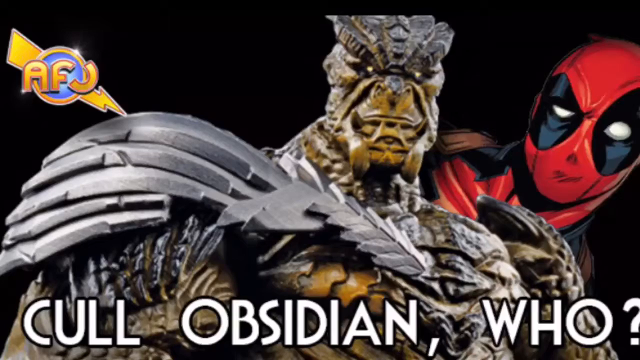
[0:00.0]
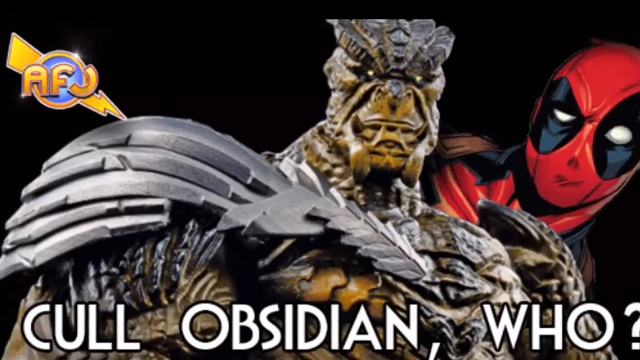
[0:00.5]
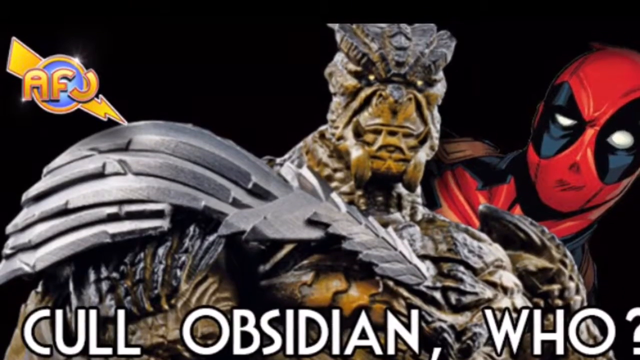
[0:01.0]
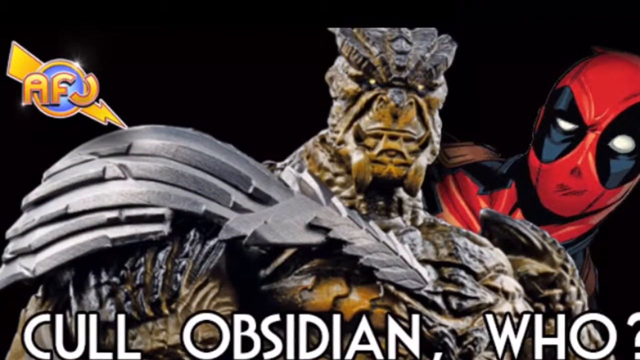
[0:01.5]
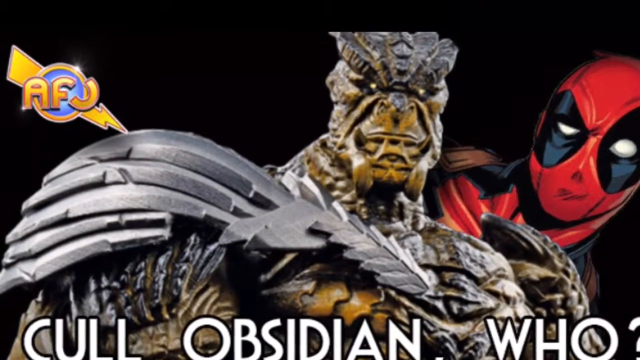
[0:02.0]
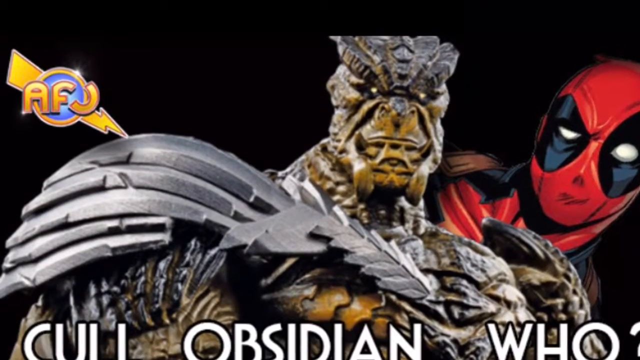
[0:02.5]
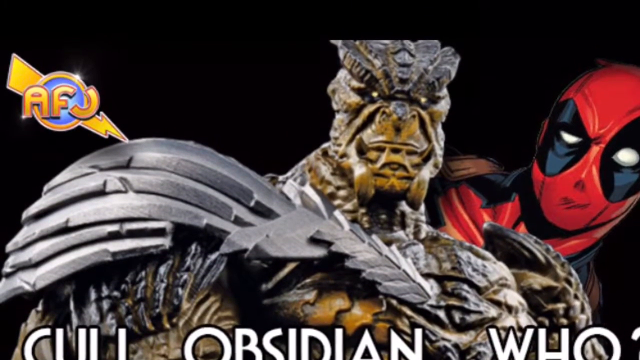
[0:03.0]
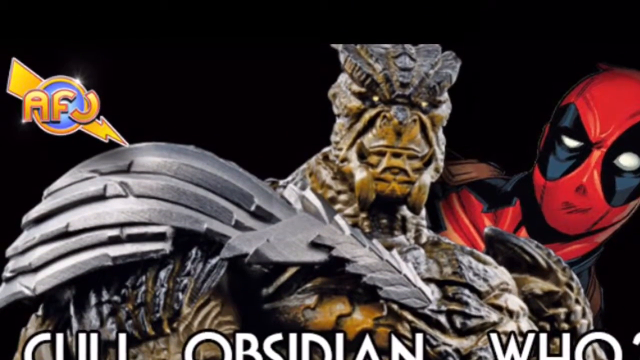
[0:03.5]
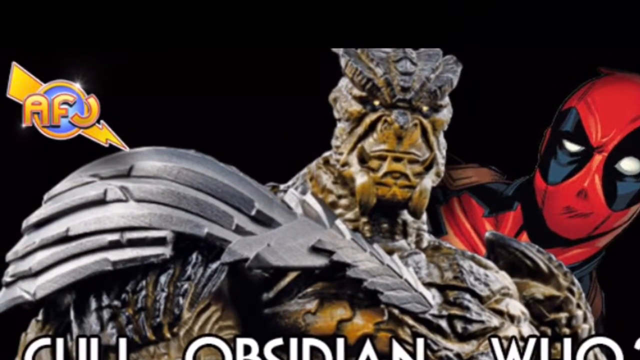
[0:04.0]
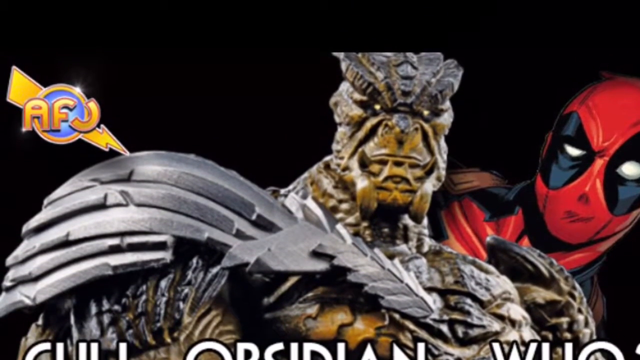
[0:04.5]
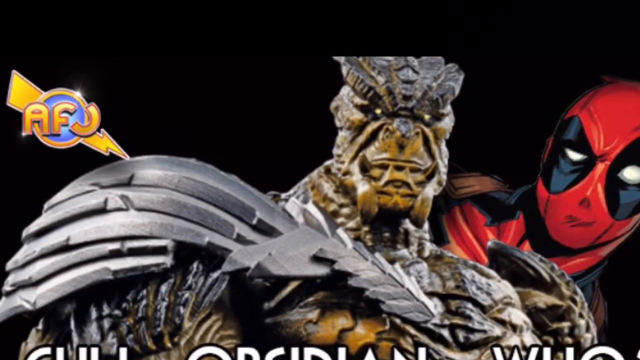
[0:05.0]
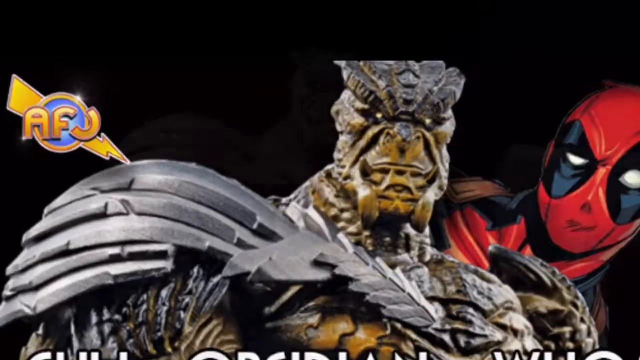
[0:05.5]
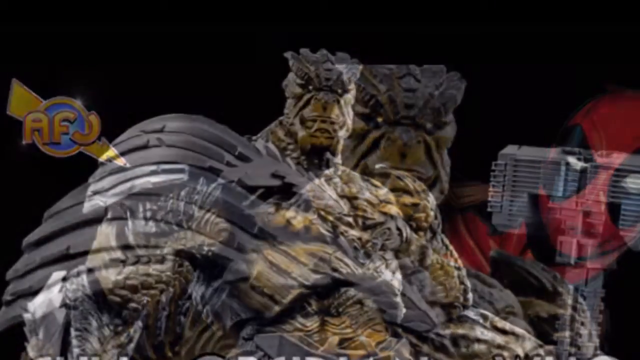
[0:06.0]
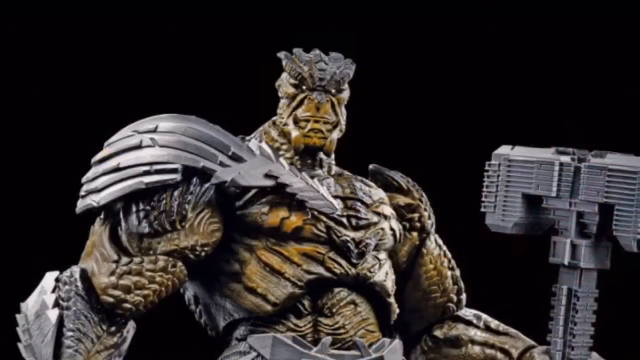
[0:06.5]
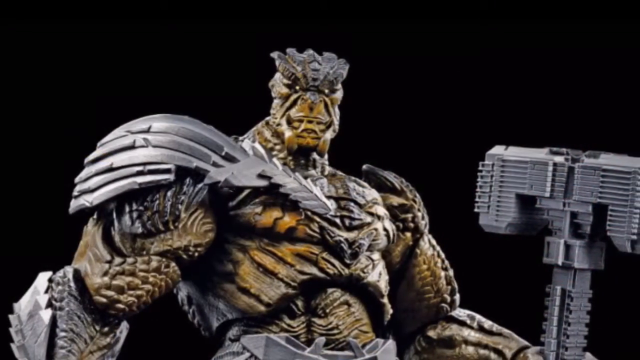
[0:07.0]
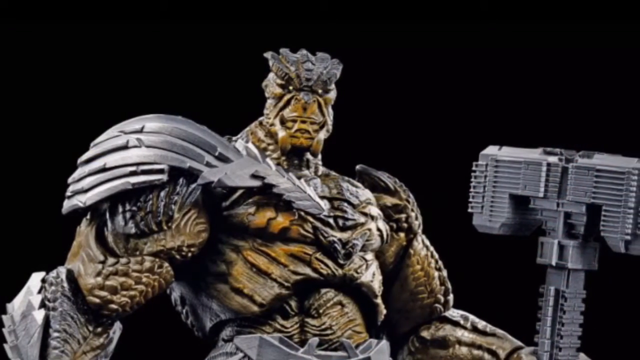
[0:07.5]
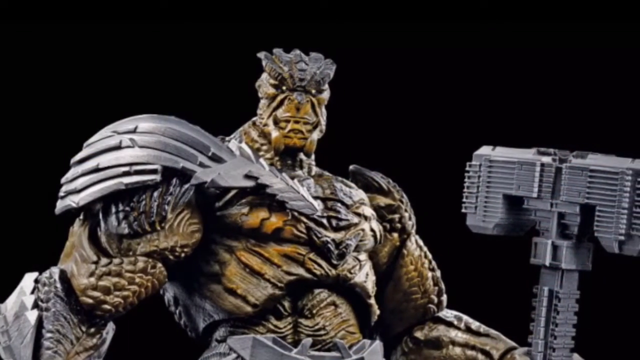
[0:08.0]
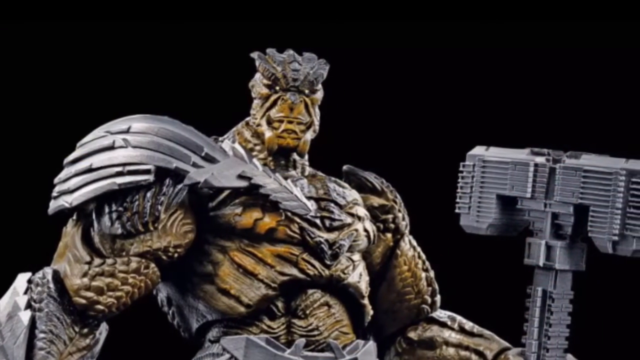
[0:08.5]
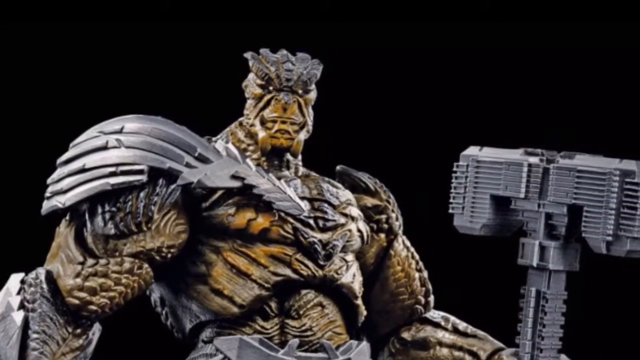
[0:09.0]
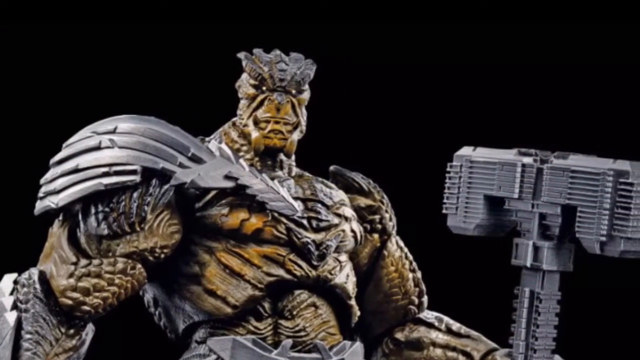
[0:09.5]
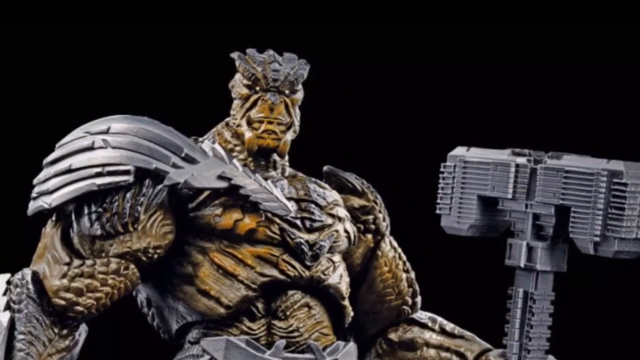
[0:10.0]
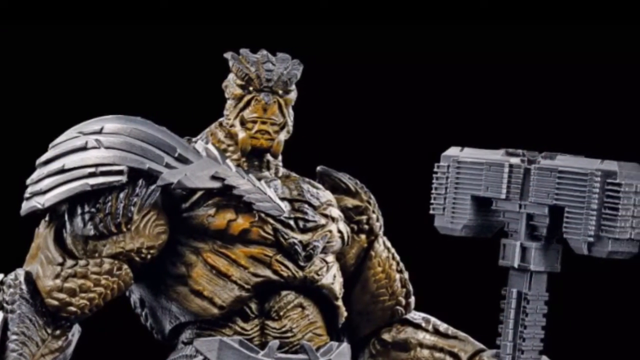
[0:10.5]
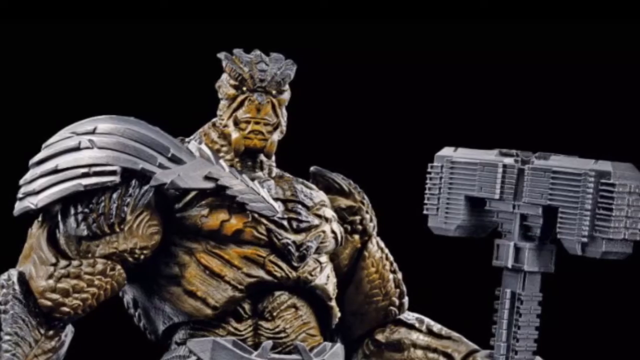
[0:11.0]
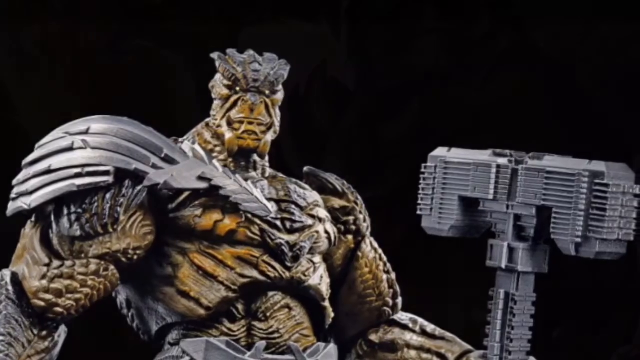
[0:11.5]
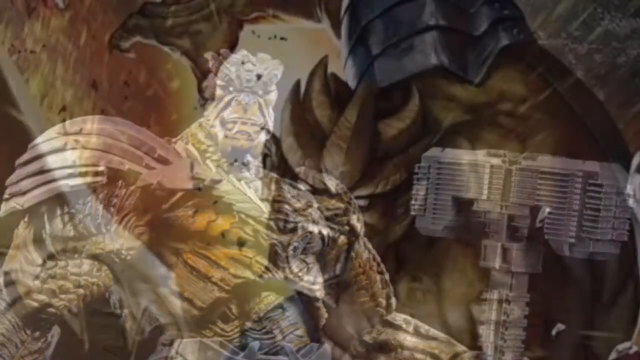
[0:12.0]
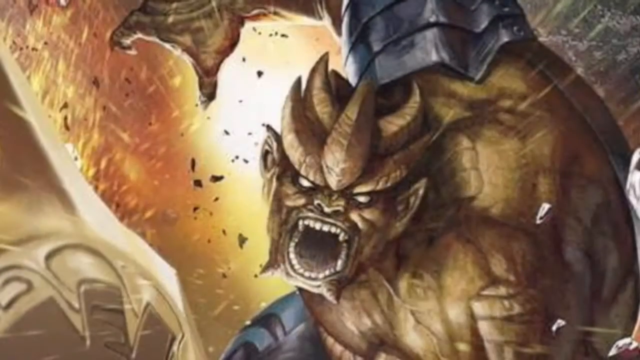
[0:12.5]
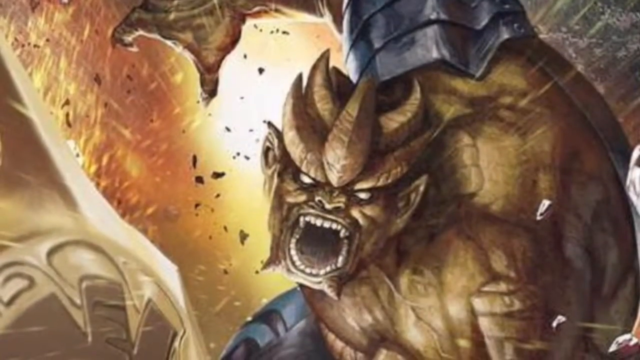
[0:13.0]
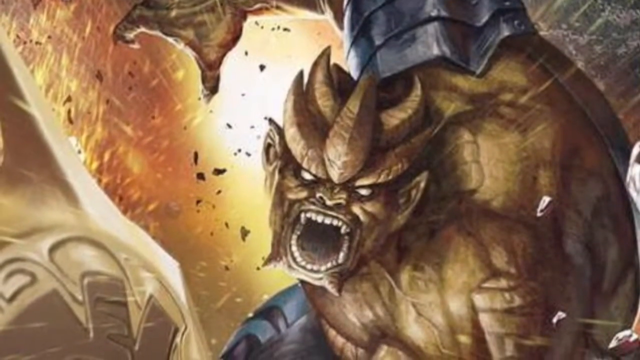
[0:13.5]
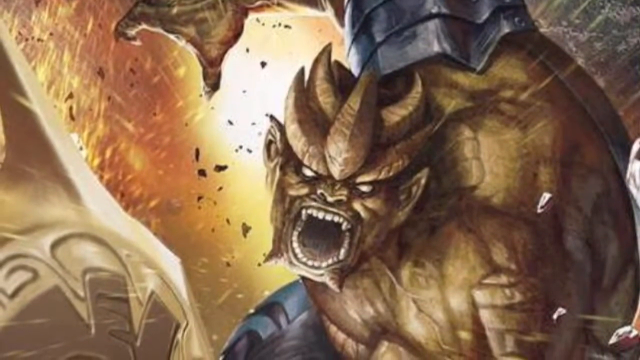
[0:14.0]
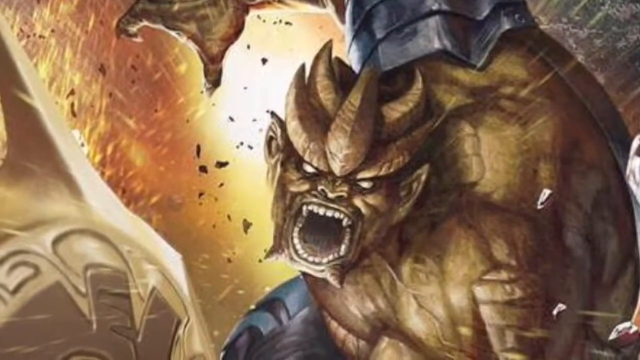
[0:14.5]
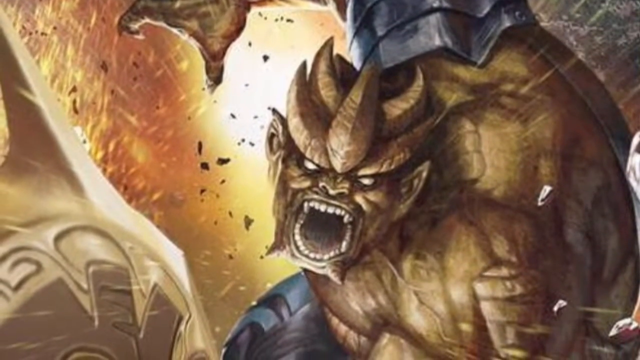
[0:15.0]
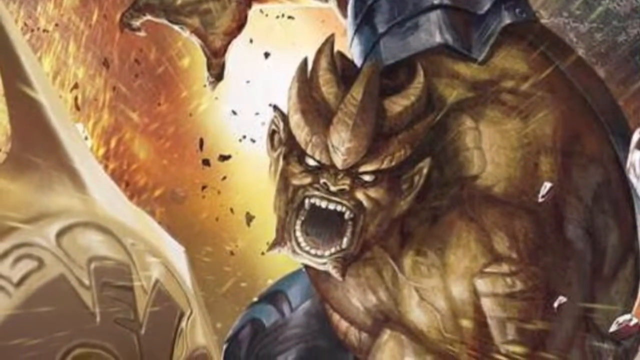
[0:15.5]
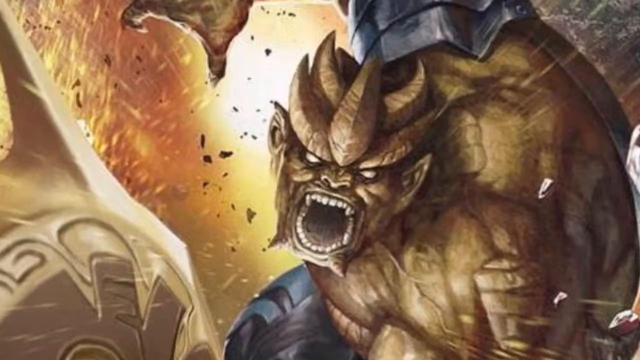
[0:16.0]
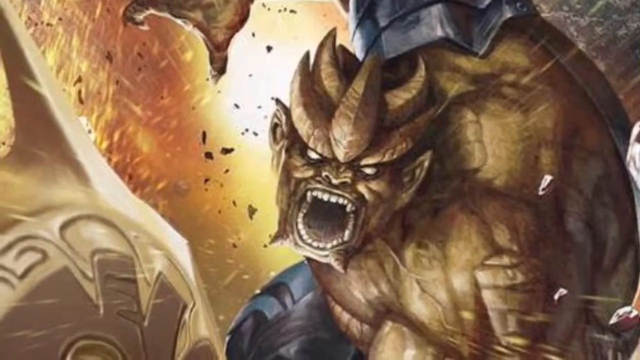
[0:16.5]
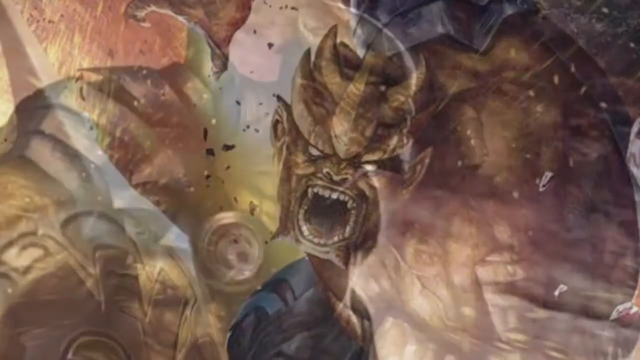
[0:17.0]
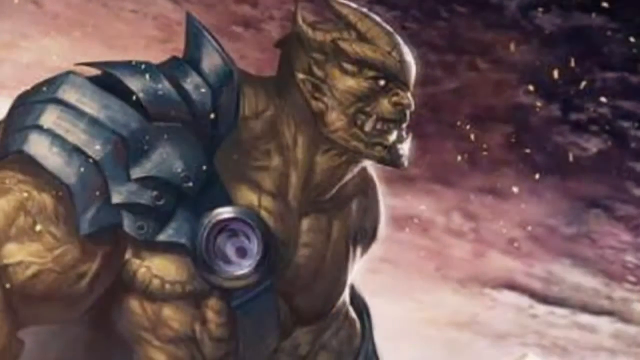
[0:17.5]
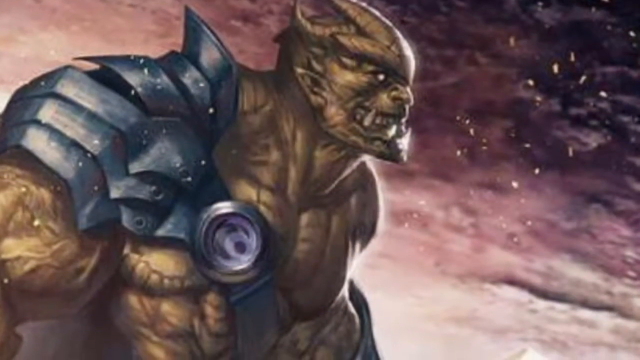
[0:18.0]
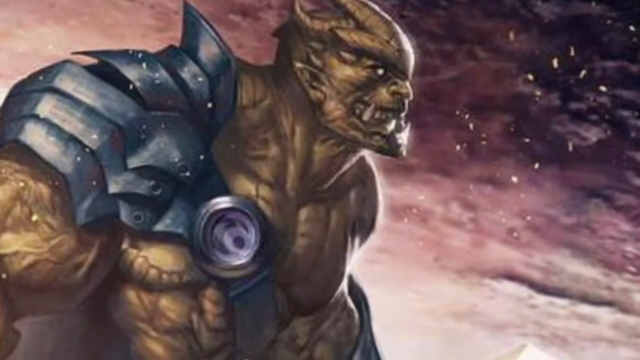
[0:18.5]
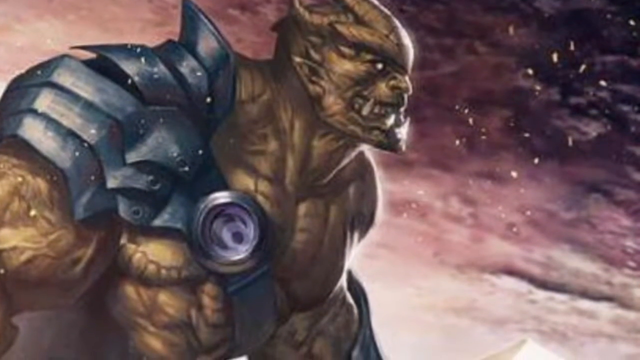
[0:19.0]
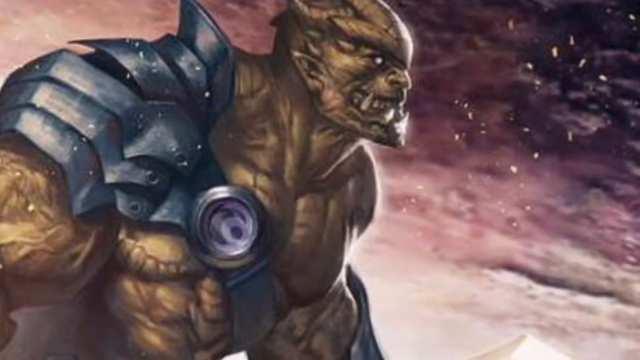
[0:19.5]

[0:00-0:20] A screen shows a couple of characters from what looks like a pretty intense action game. In the foreground is a mean monster with a gray head, a sort of light tan face and evil-looking eyes. Behind him on the right side is a character that looks somewhat like Spider-Man, with a red head and black eyes with white in the middle. Underneath, text on a black background reads "CULL OBSIDIAN Who?" with a question mark. In the upper left corner is a lightning strike icon with "AFJ" in its center. The view seems to tilt up toward the top of the character's head. The screen then shows the evil-looking character holding what looks like a giant hammer, though it is not a real hammer: it has many different sections, lines and squares, like a piece of Lego that has been put together. This slowly transitions into part of what looks like a computer-generated action scene with the same evil-looking monster, his mouth wide open, one arm back to the left and his face looking straight forward. He has two rows of teeth, with two sharp ones on top and the bottom ones all fairly flat; his mouth is mostly gray inside. A bunch of shrapnel flies off on the left side, with bright orange light behind it. The view slowly scrolls through the scene, looking at it from different angles. The monster is then shown facing toward the right, with sharp teeth pointing upward from his gums; his mouth is closed but his lips are open. A piece of shielding over his shoulder is made of layers of metal that move with his shoulder. The monster's body is very muscular and a sort of golden color. The sky in the background is purple and pink, with what looks like white shrapnel flying around in it.